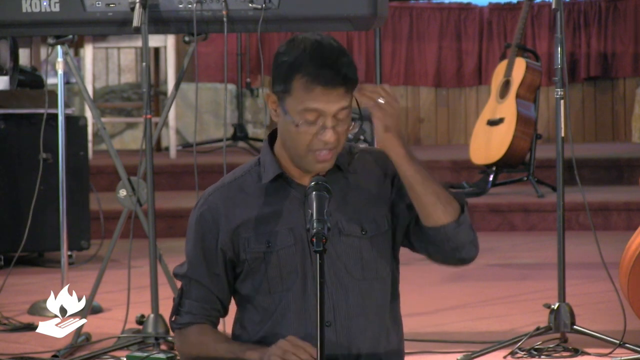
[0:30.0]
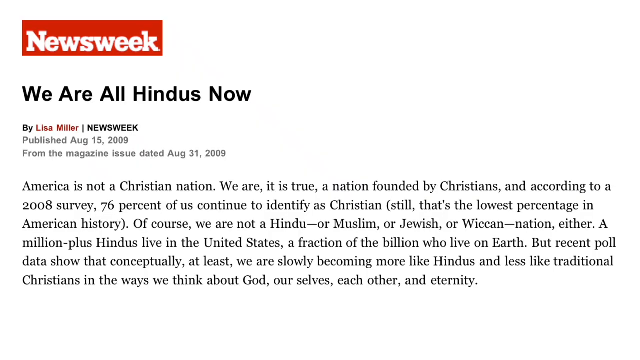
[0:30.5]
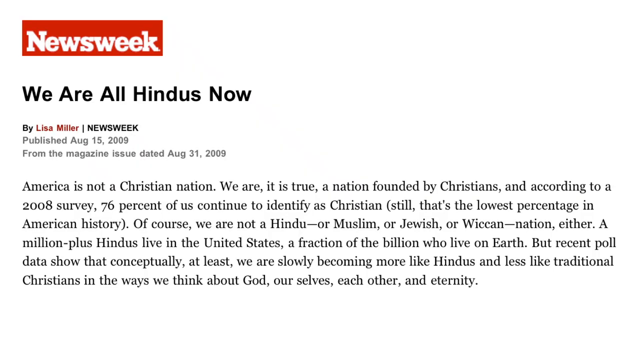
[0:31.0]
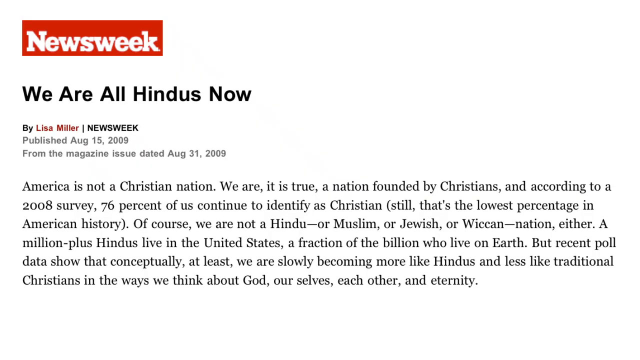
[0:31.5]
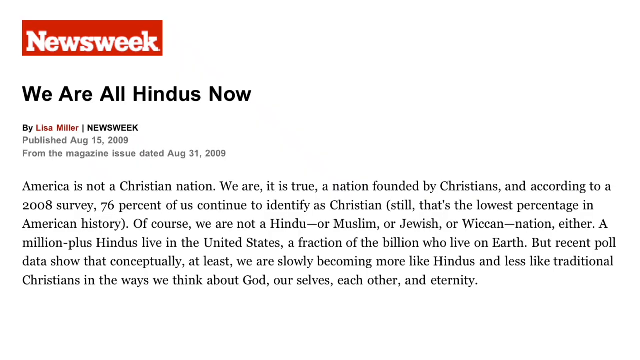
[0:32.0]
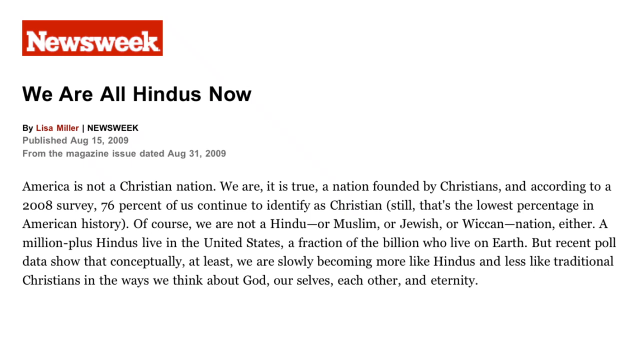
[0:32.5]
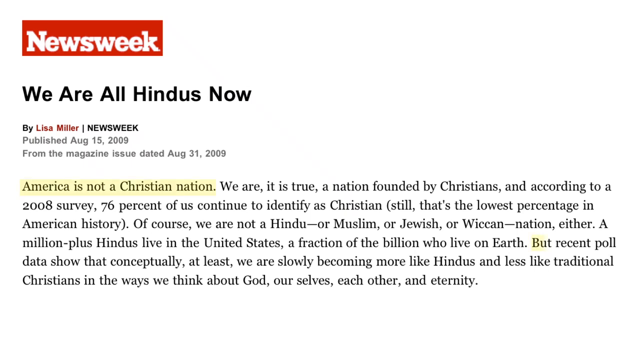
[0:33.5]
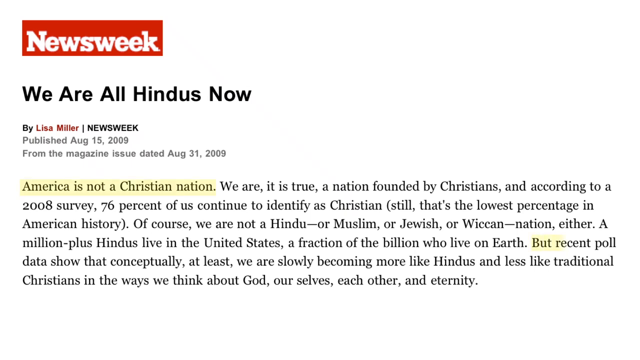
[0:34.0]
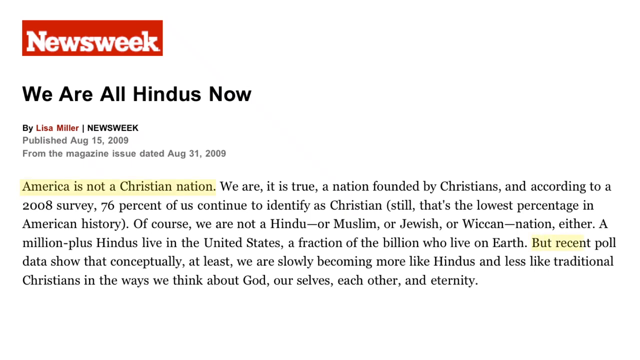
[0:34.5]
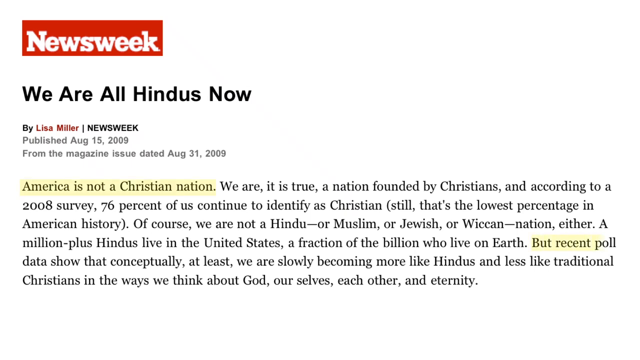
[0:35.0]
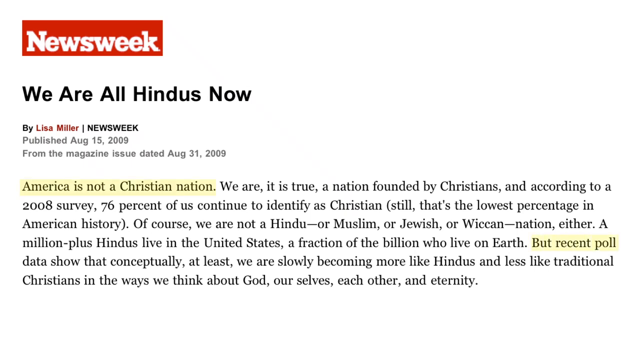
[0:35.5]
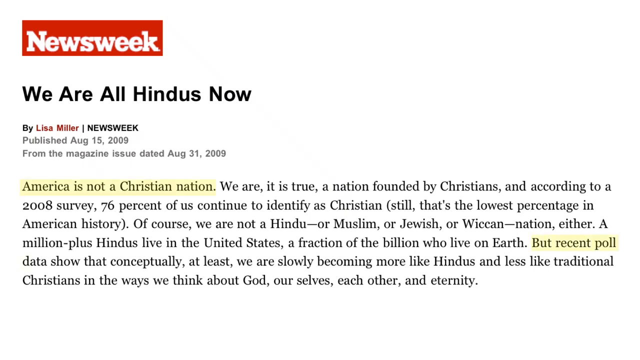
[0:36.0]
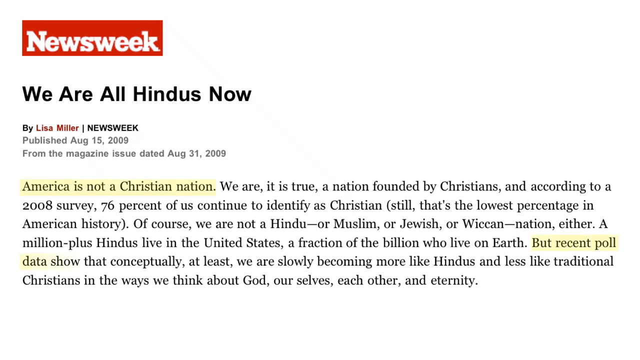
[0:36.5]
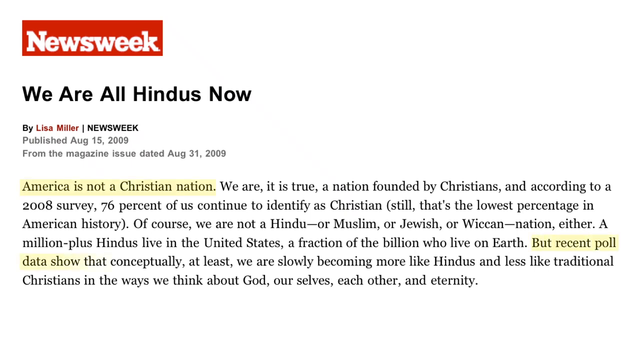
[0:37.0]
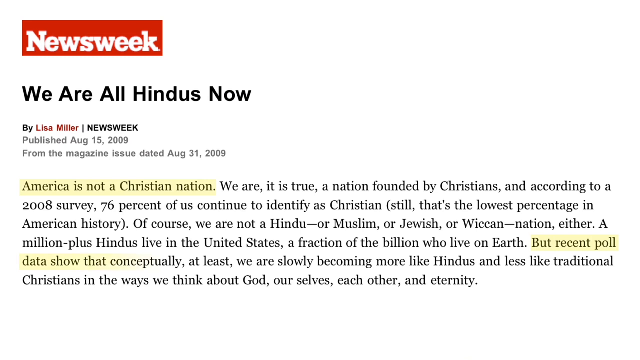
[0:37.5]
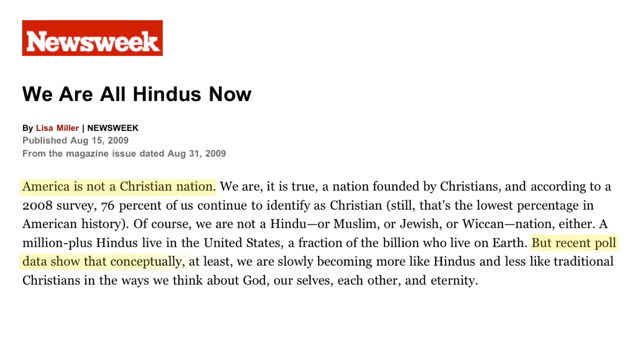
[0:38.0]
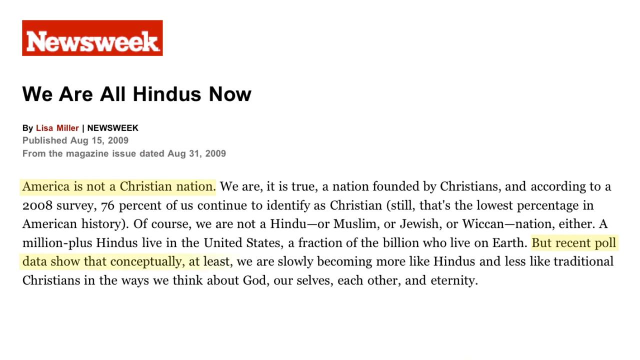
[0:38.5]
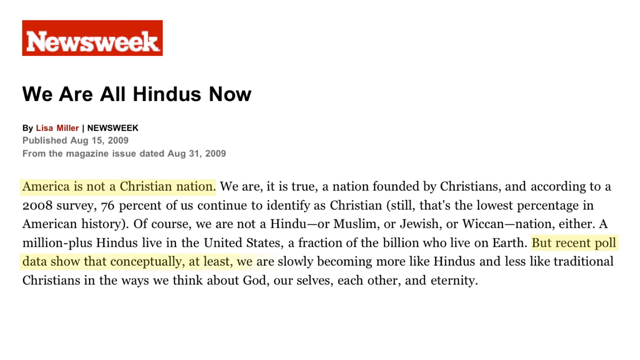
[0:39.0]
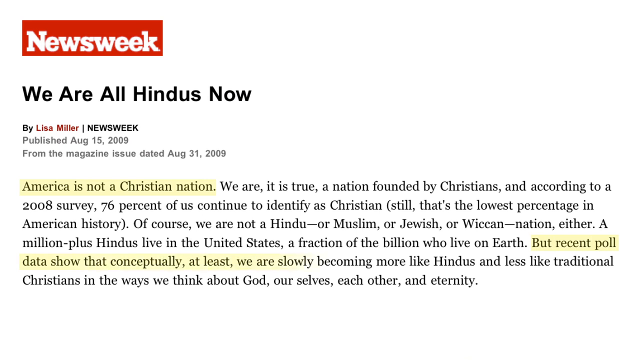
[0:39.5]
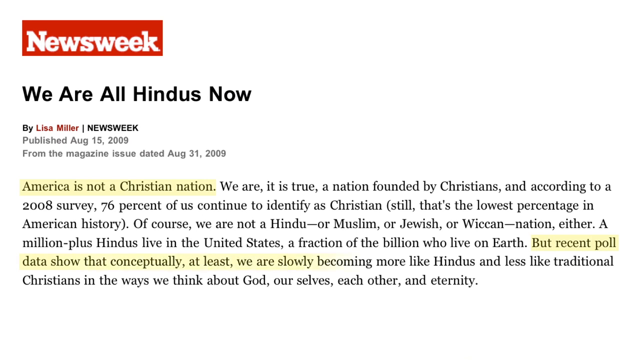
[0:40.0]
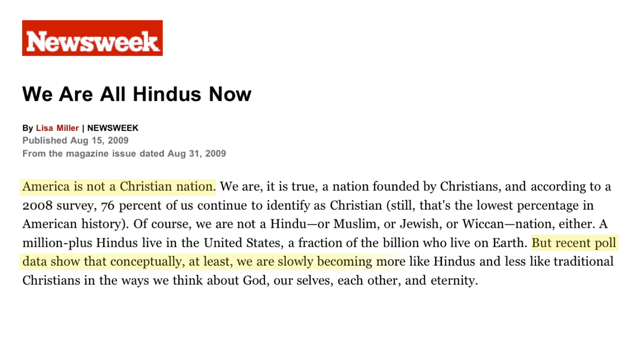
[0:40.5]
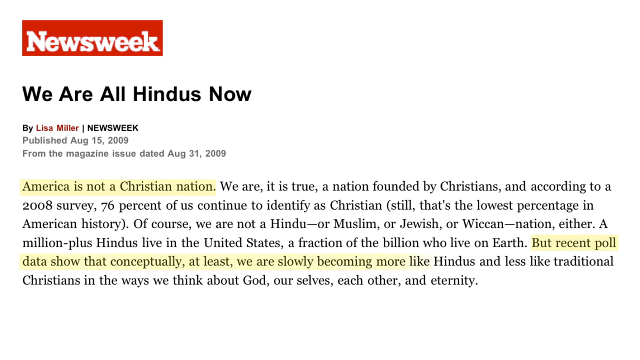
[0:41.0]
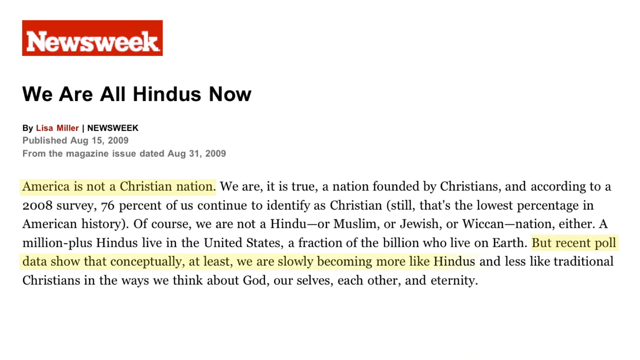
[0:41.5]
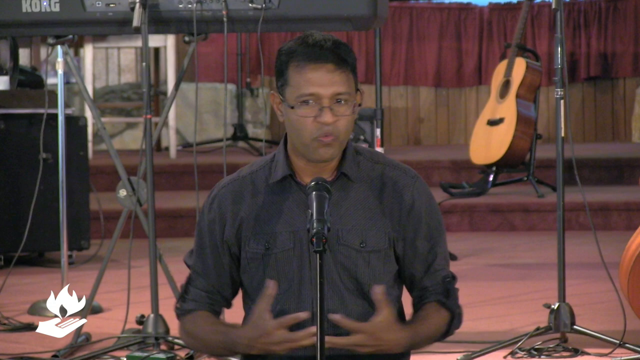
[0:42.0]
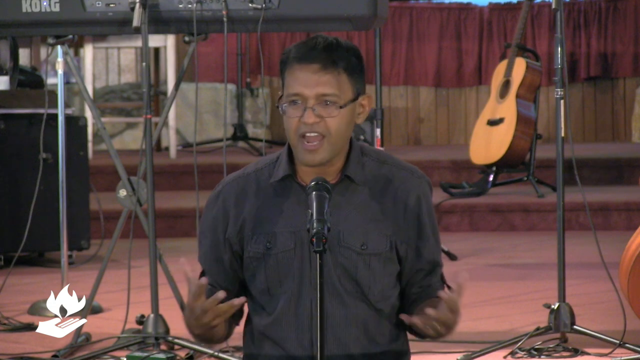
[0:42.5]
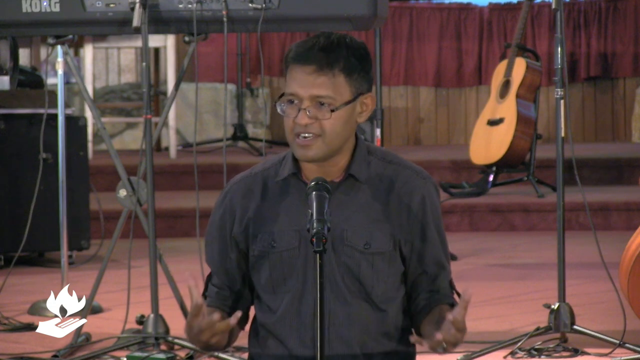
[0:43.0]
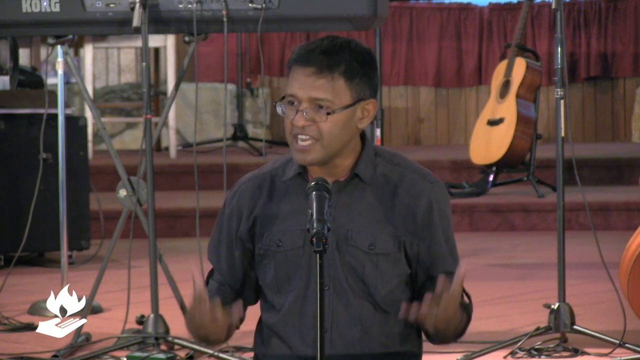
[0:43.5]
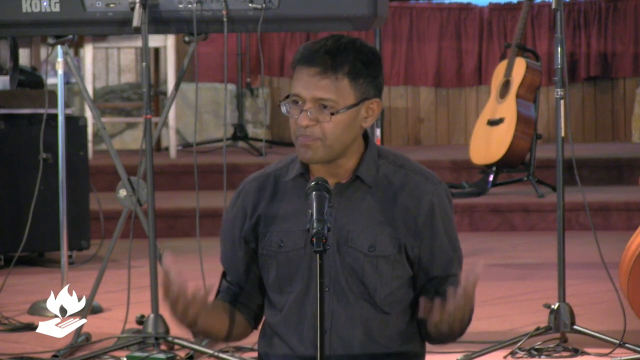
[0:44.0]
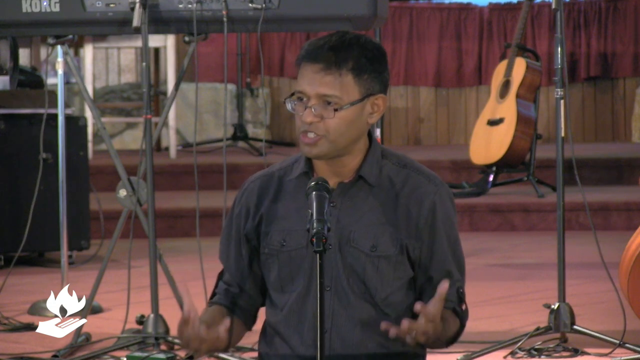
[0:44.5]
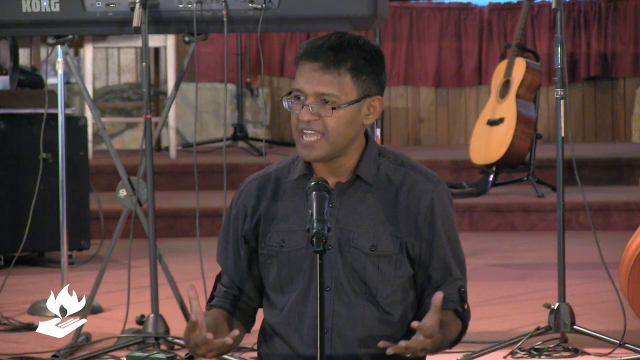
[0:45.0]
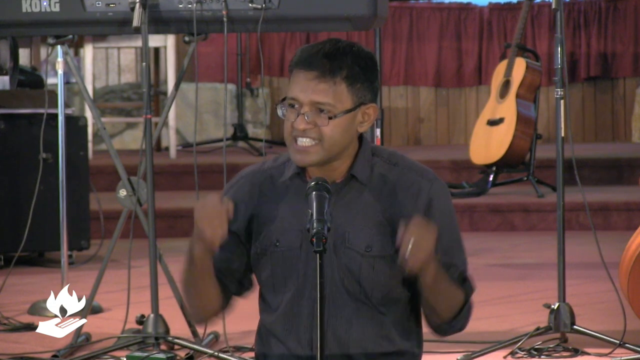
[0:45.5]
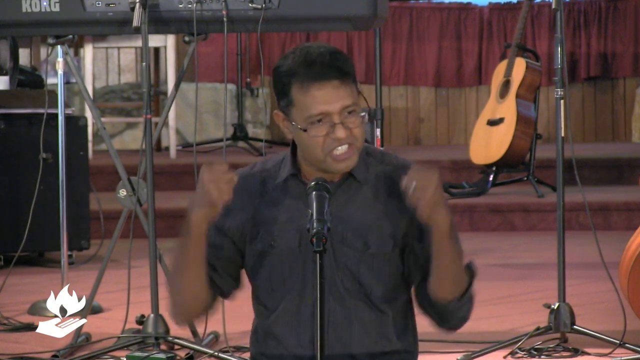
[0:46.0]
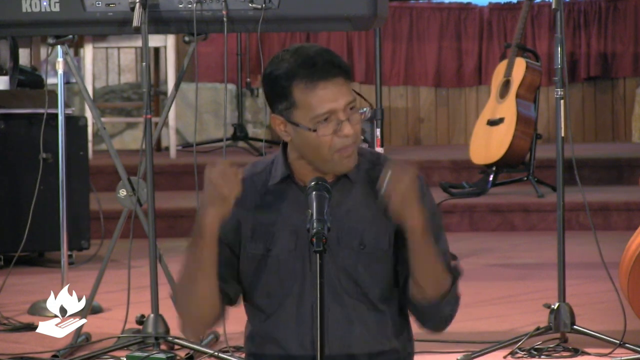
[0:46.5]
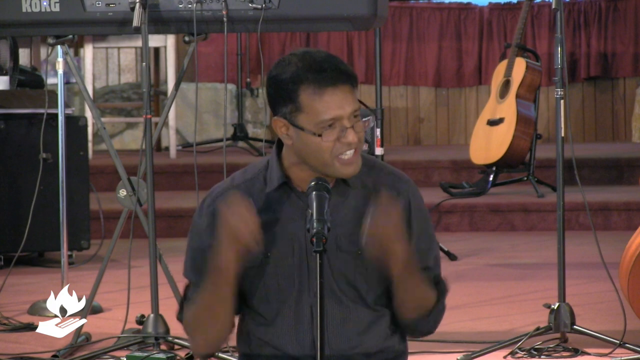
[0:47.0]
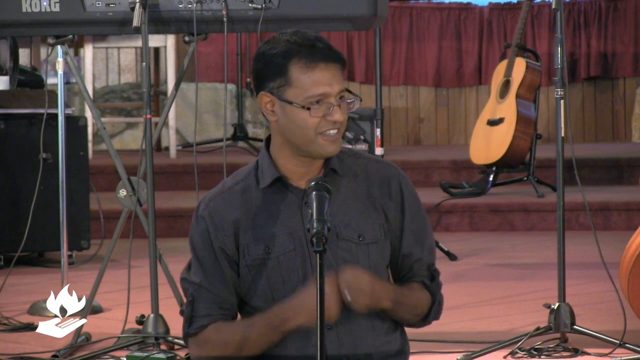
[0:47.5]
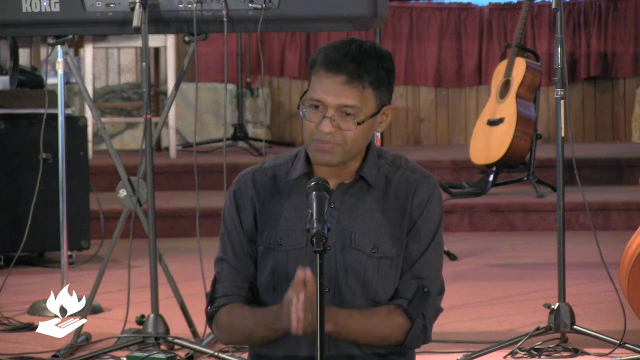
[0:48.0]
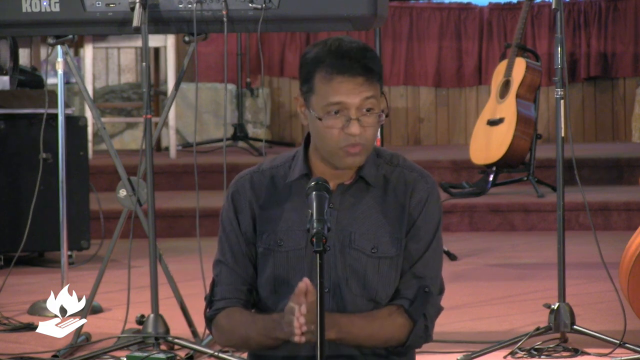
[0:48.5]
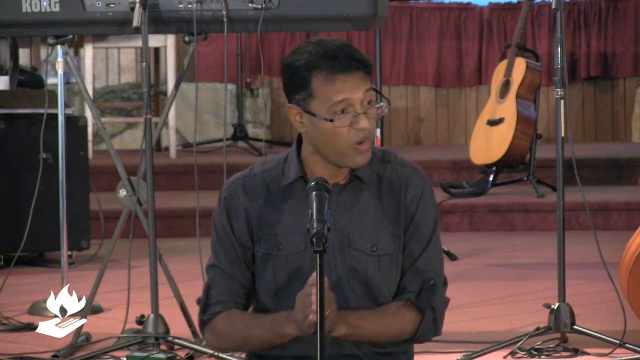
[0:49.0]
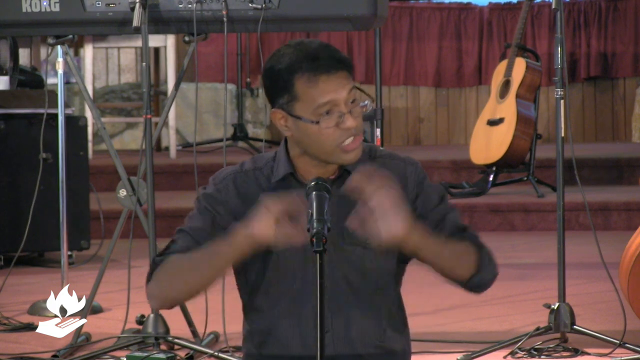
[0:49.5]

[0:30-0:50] The man with glasses in the gray button-up shirt appears to scratch his forehead, and a ring shines on his left ring finger. The screen switches to a document with "Newsweek" in white text in front of a red rectangular banner. It reads "we are all Hindus now" by "Lisa Miller", with Lisa Miller written in red, and "Newsweek" in all caps, "published August 15, 2009 from the magazine issue dated August 31, 2009". A paragraph reads "America is not a Christian nation", which appears to be highlighted, followed by "but recent poll data show that conceptually at least we are slowly becoming more like Hindus", highlighted in yellow. The screen shifts back to the speaker at the mic, who gestures vigorously with his hands and seems passionate.